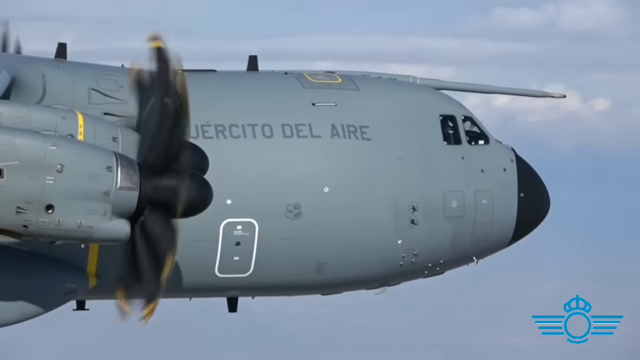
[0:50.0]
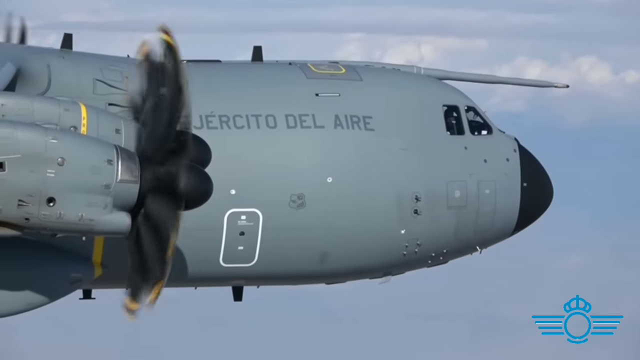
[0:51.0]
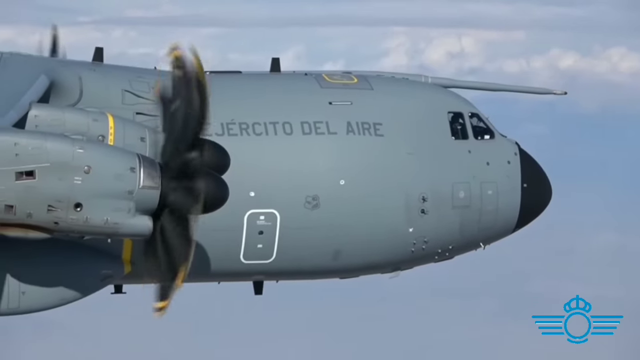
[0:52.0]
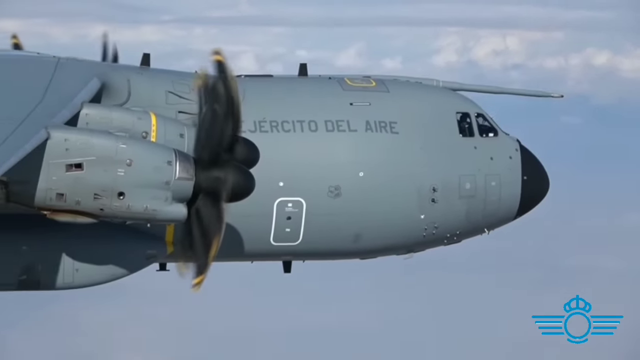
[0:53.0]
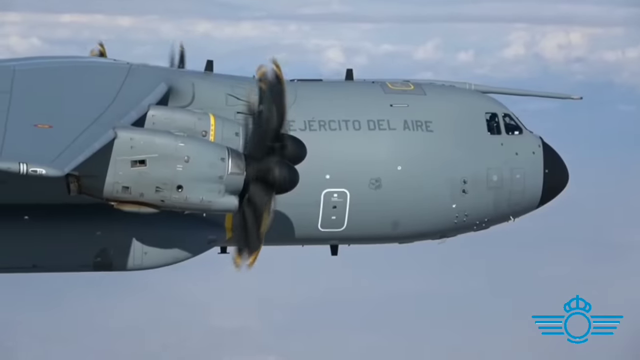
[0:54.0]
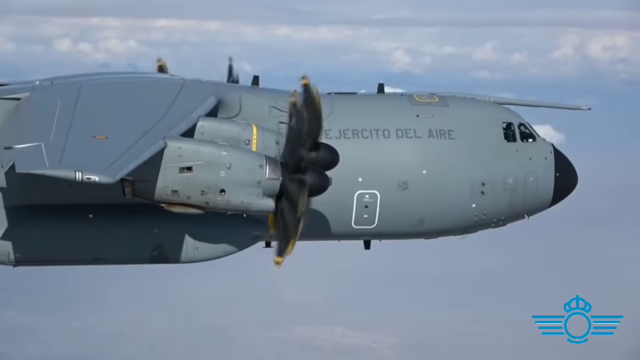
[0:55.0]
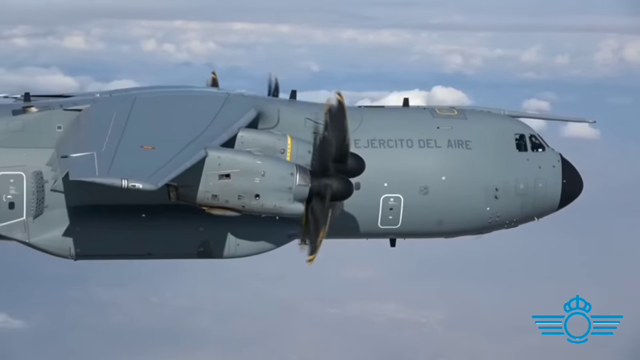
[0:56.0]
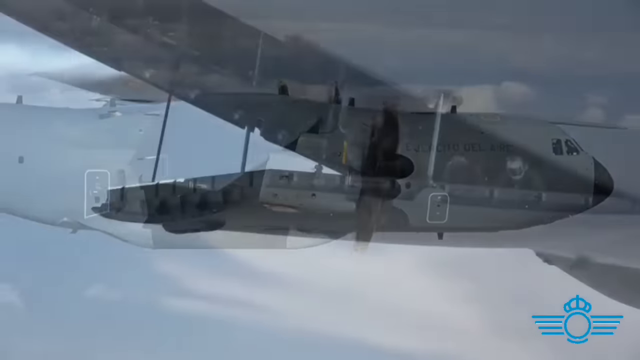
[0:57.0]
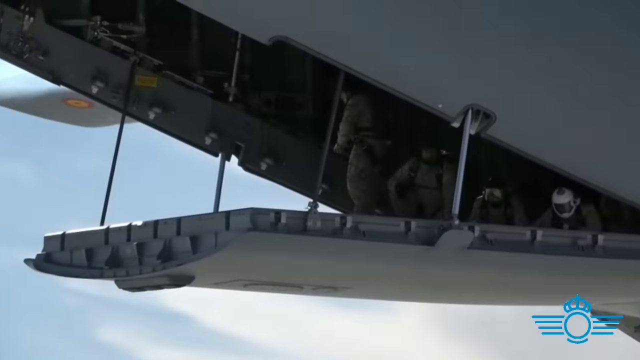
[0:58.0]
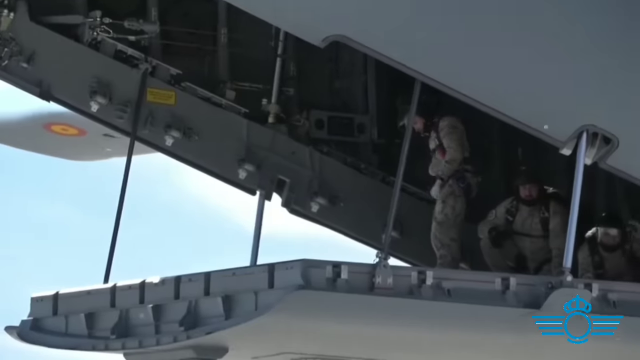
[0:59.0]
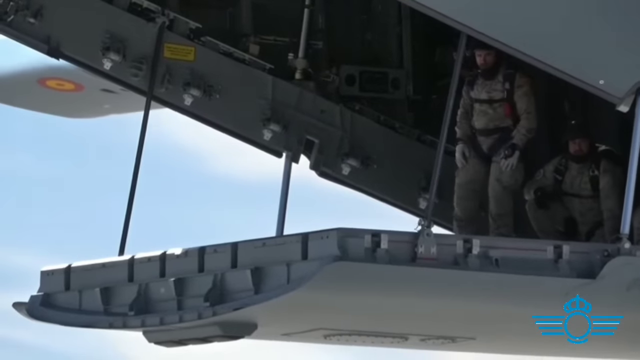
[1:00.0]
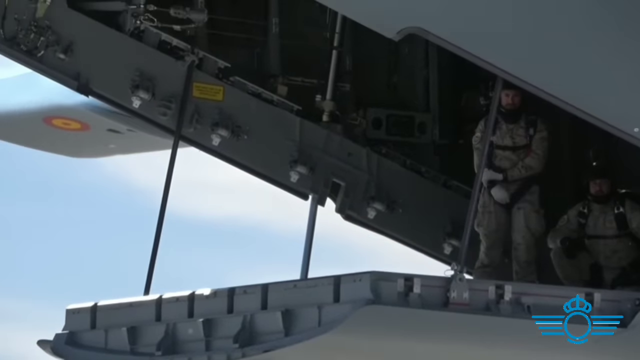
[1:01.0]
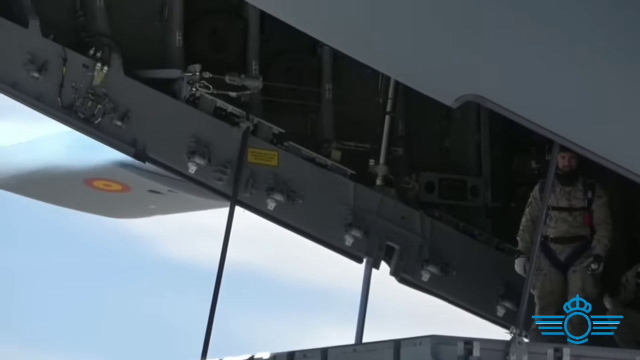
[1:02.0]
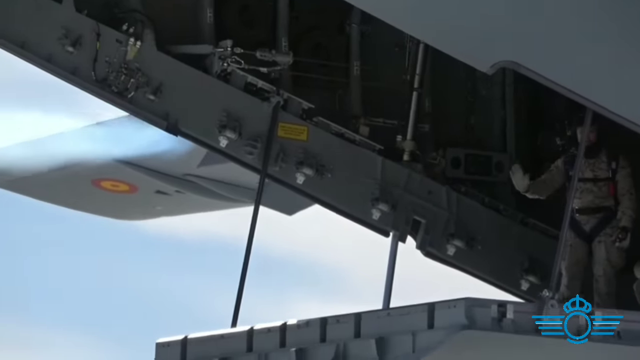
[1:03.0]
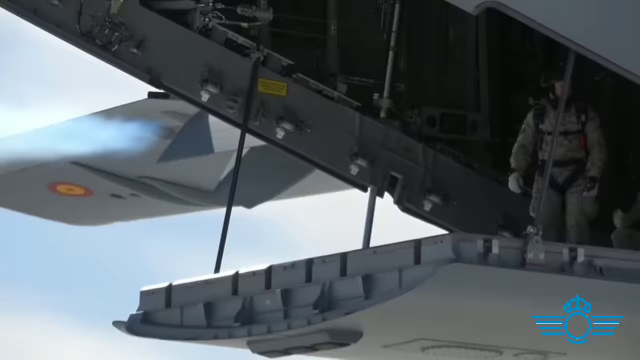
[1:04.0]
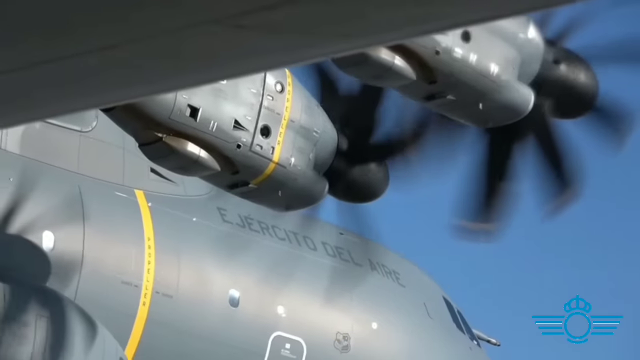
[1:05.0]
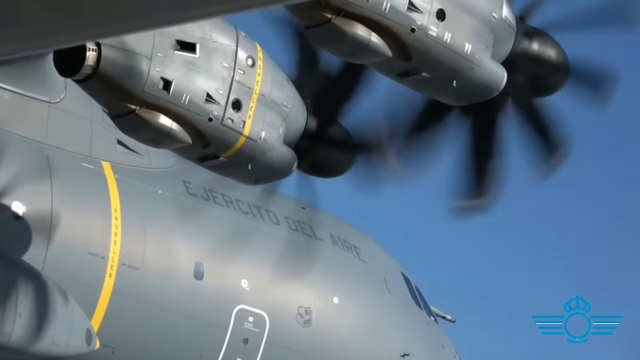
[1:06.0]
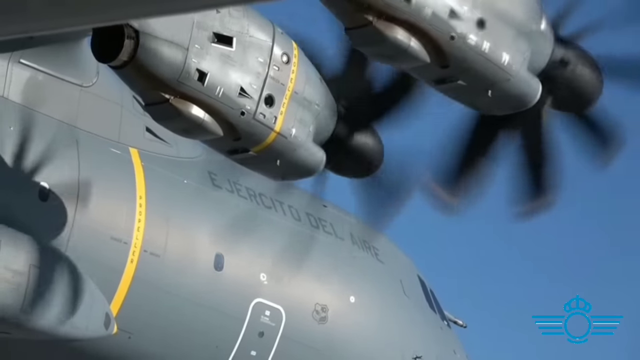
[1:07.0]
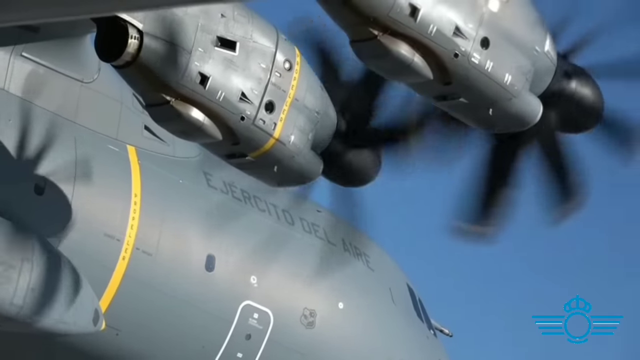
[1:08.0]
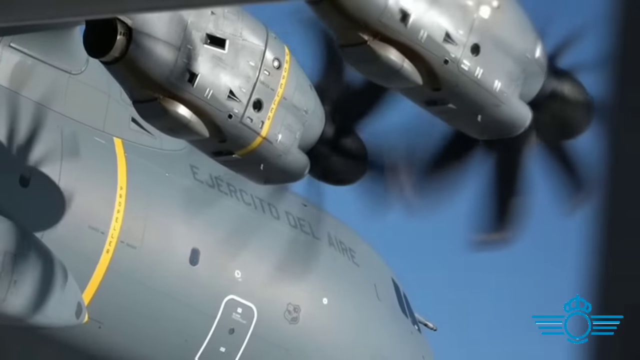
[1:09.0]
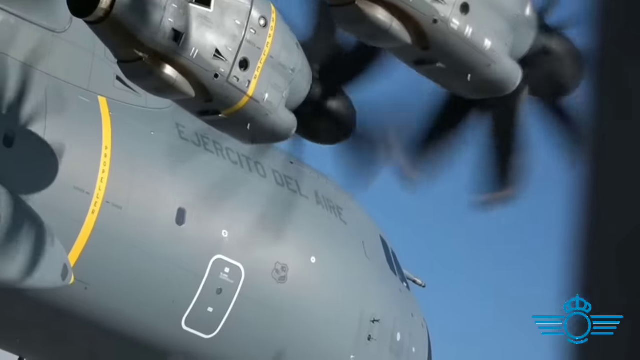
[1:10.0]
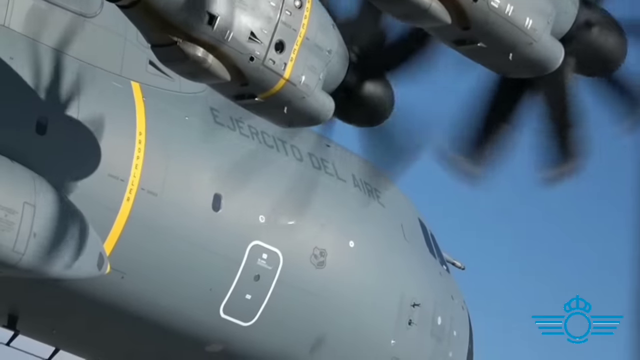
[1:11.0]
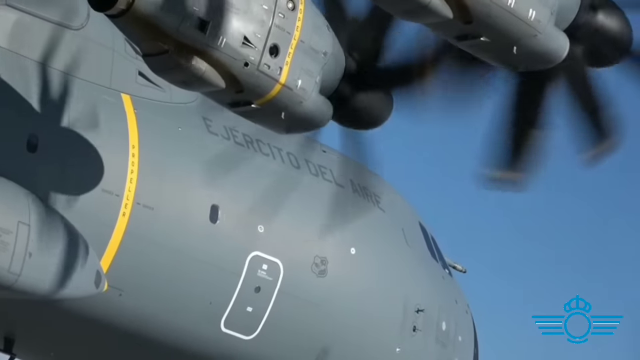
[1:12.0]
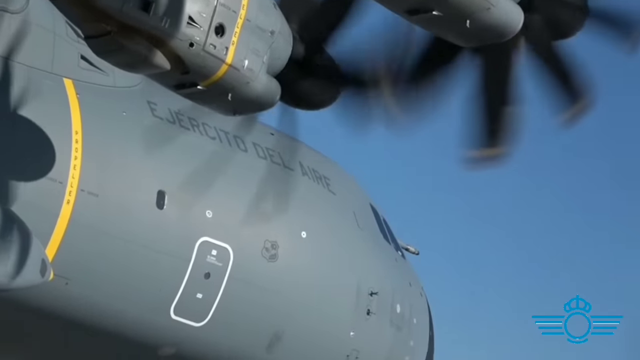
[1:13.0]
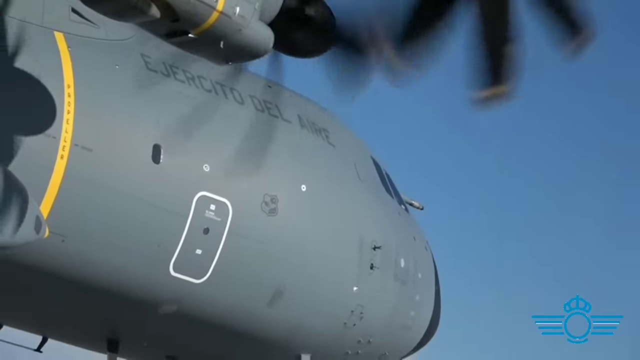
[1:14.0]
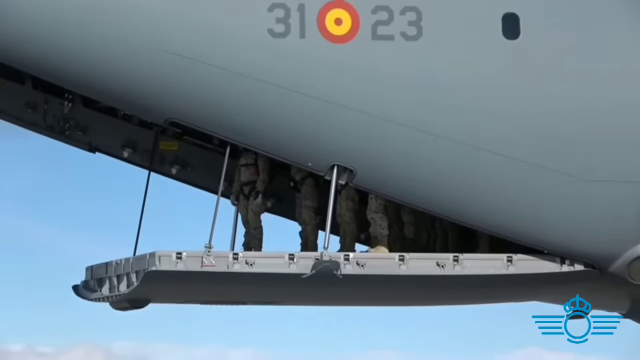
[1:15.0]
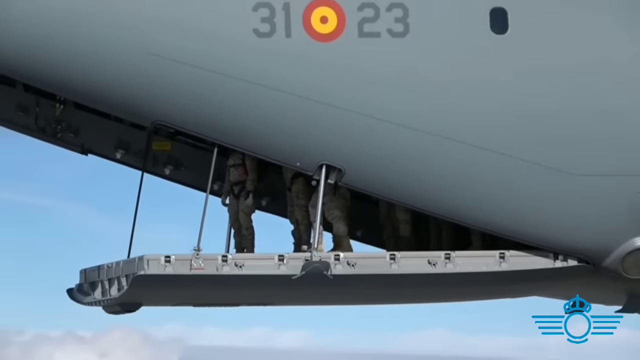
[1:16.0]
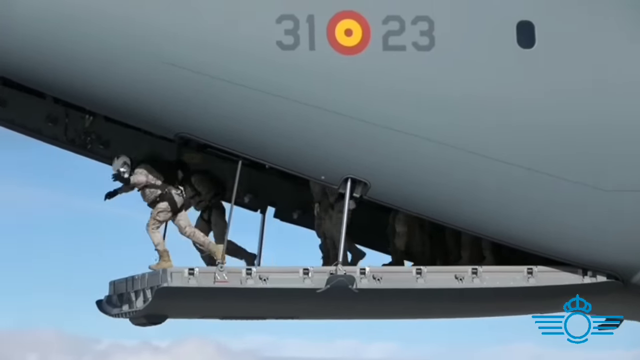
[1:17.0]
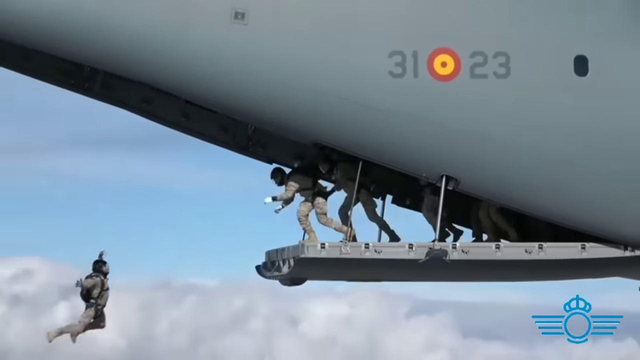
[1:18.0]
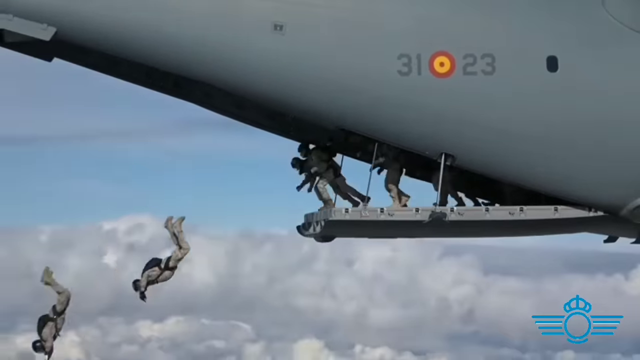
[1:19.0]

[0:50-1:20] The outside of the aircraft is shown. On the visible side, the right side, two propellers spin side by side. The propellers appear to have sharp blades that appear to be made of gray metal. In the background the sky looks overcast and cloudy, but it is daytime. Words written on the side of the aircraft read "Jercito del Aire". The view then shows the back end and belly of the aircraft, where some servicemen stand and wave at the people outside of the plane beneath them. The view moves back toward the front of the aircraft, where the propellers are seen again. Then the men stand out on an area they can walk on and jump off it into the air, wearing their protective gear.